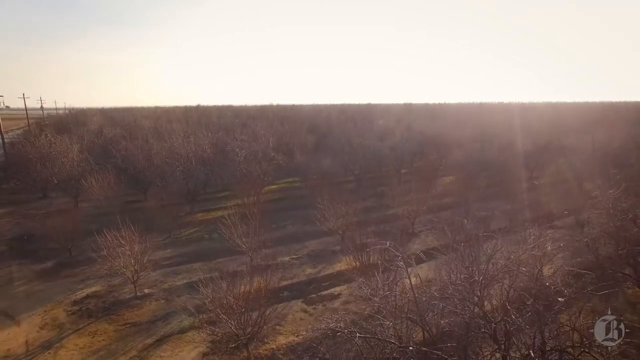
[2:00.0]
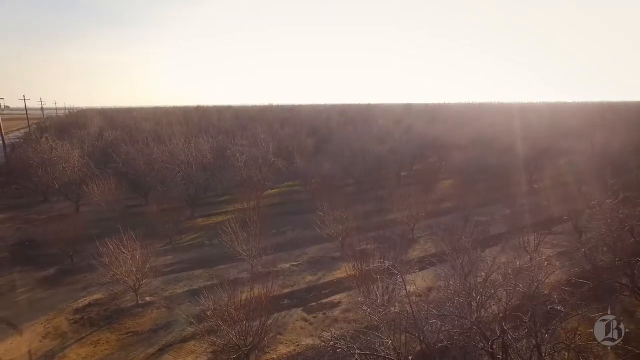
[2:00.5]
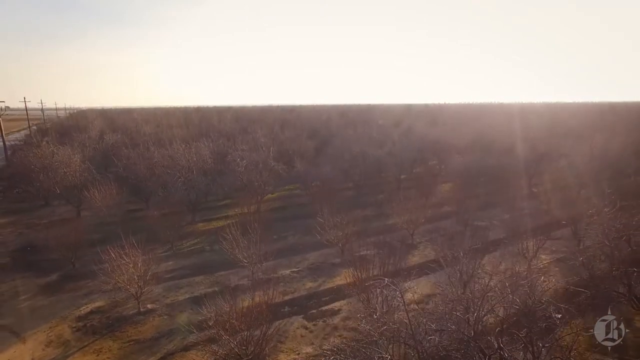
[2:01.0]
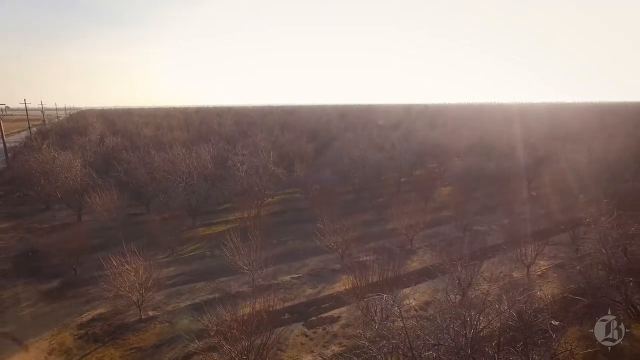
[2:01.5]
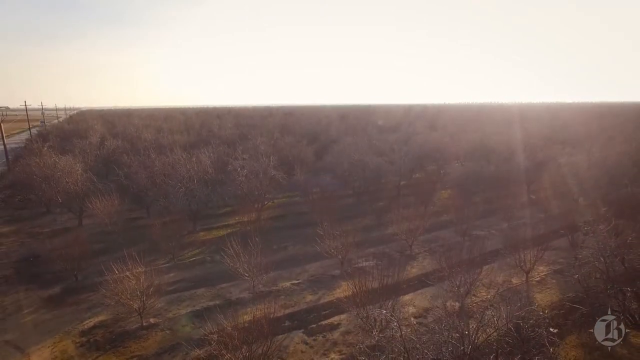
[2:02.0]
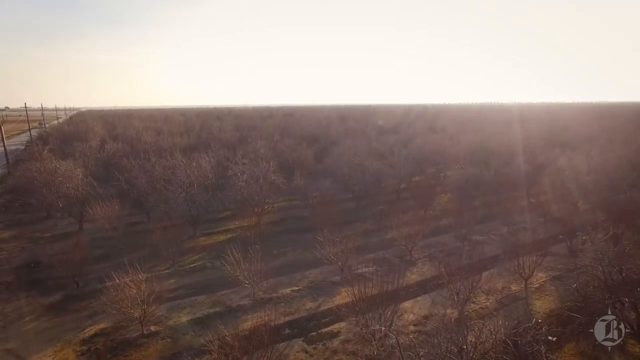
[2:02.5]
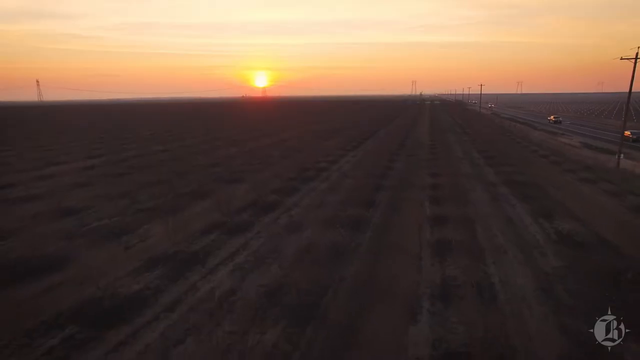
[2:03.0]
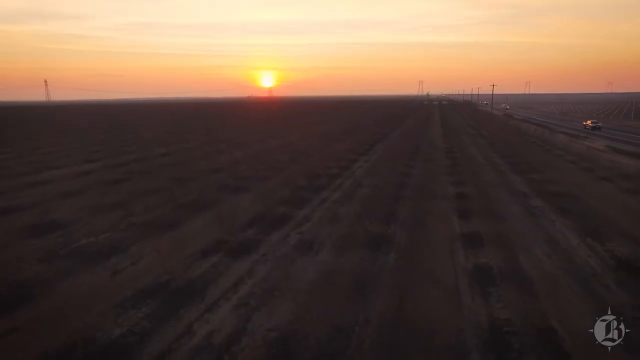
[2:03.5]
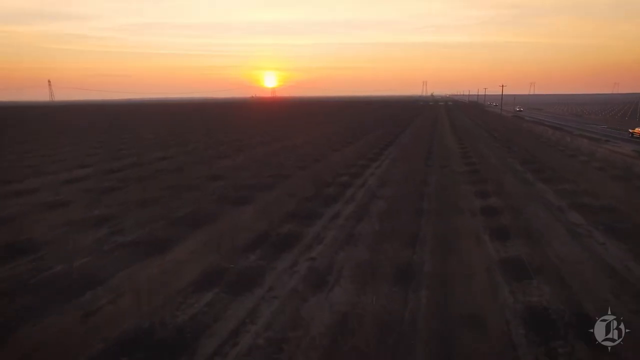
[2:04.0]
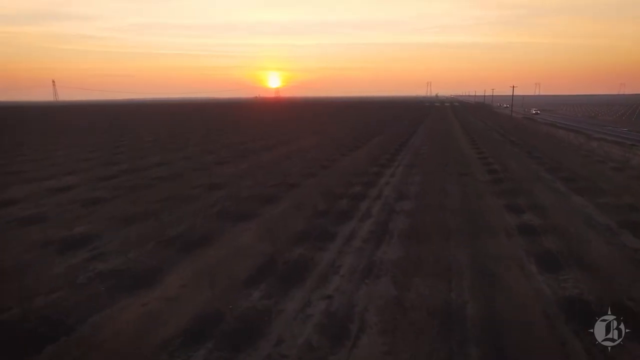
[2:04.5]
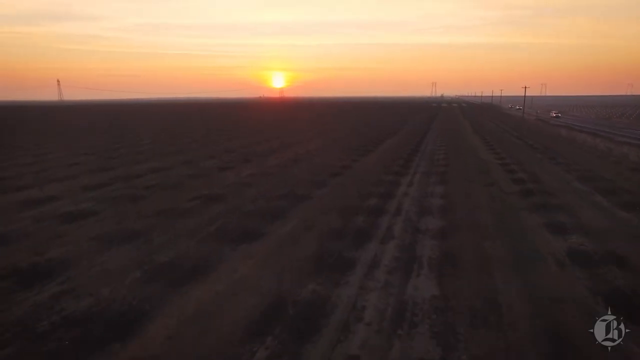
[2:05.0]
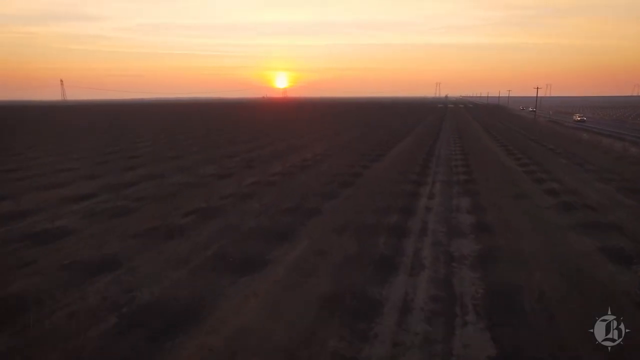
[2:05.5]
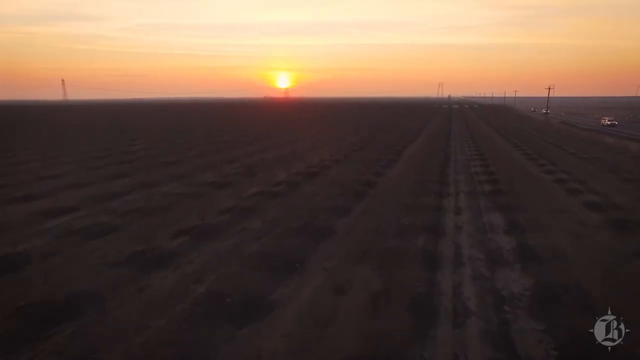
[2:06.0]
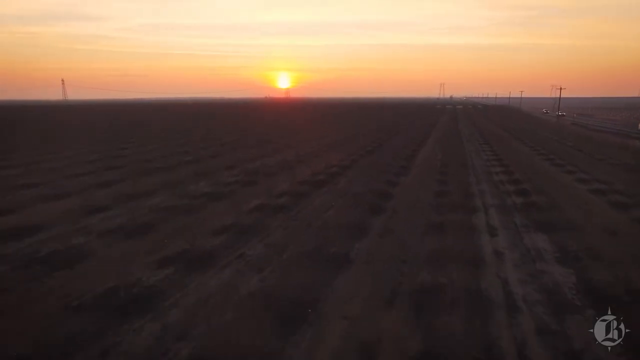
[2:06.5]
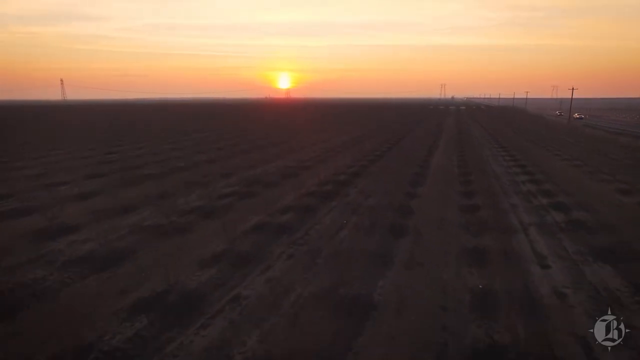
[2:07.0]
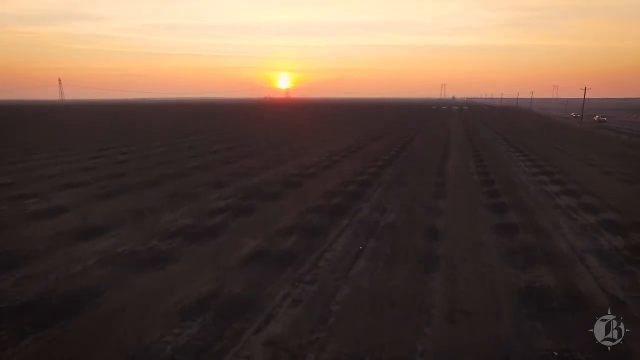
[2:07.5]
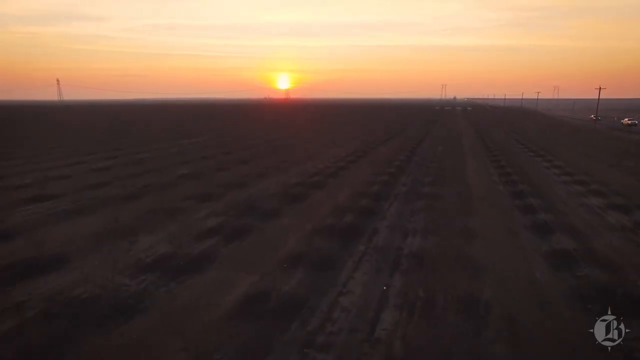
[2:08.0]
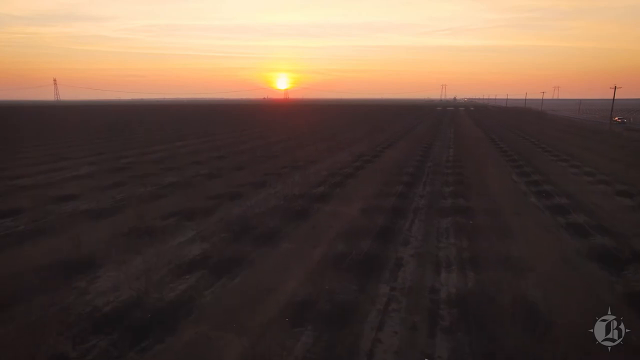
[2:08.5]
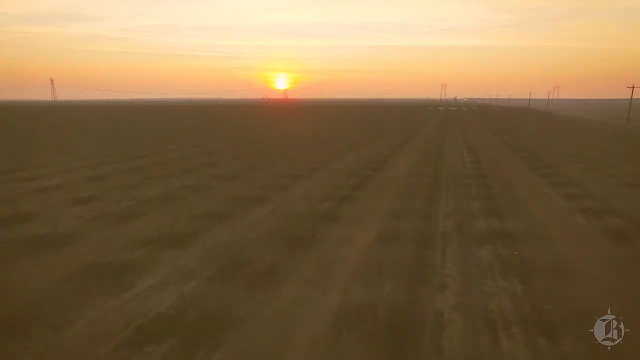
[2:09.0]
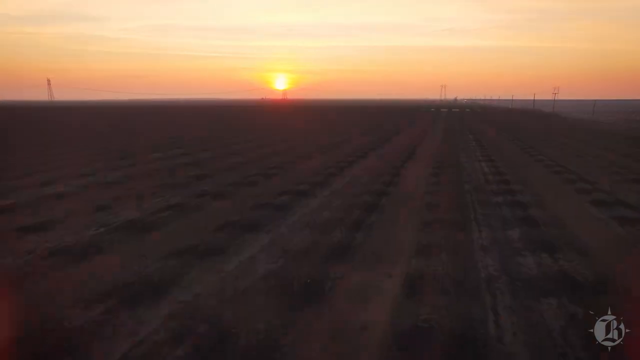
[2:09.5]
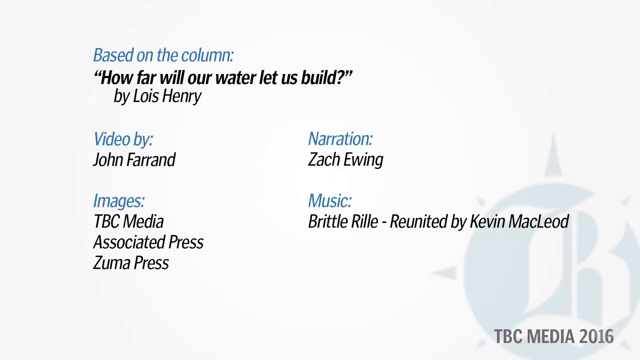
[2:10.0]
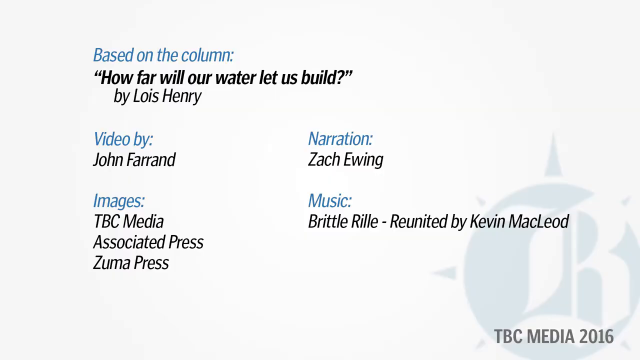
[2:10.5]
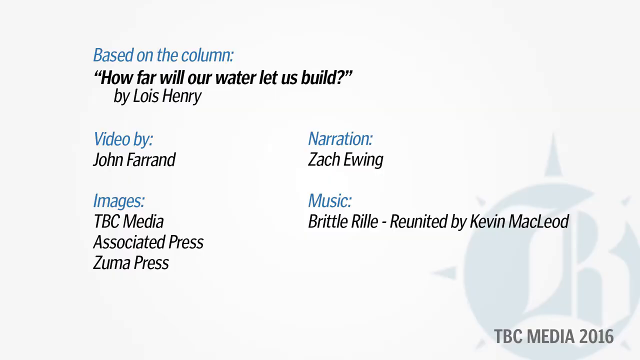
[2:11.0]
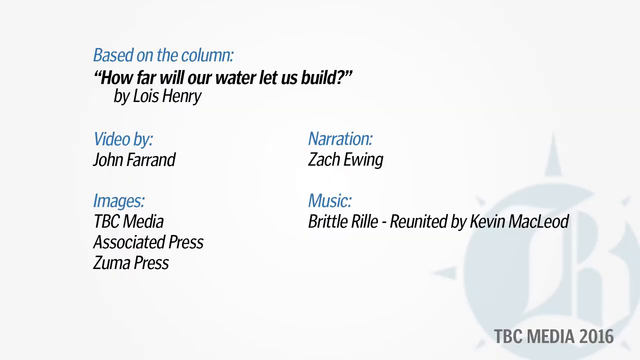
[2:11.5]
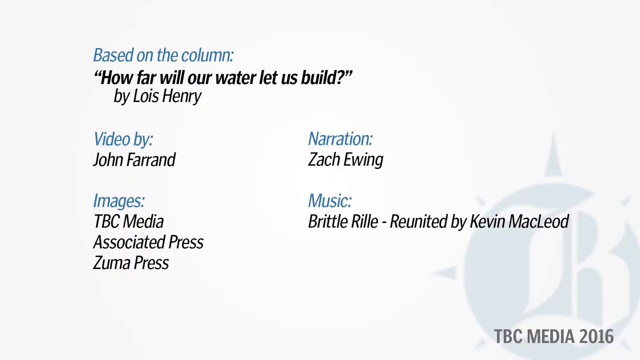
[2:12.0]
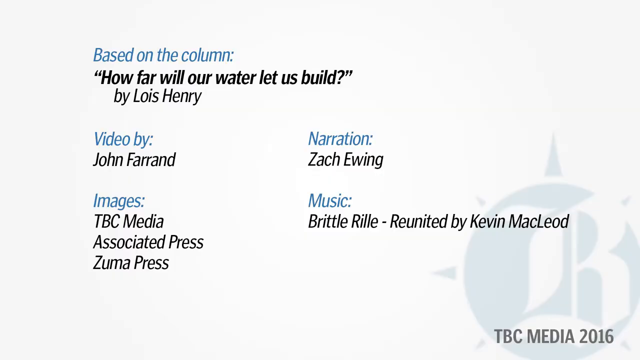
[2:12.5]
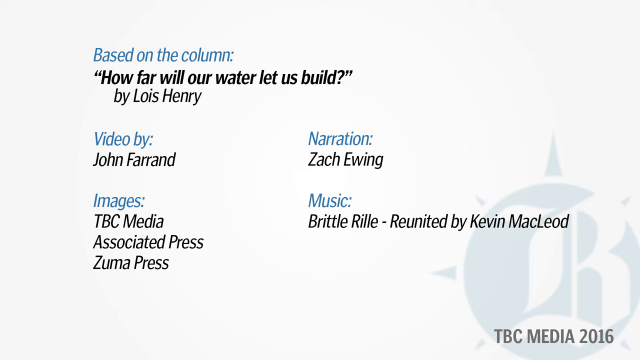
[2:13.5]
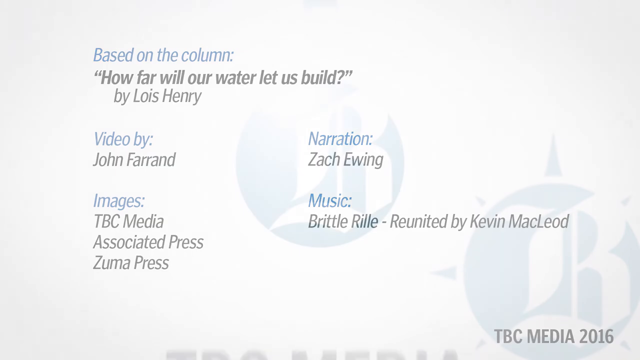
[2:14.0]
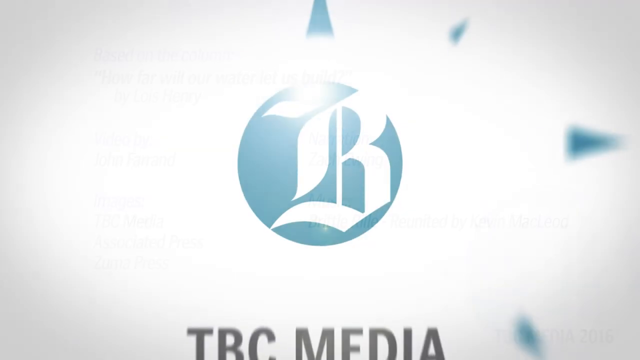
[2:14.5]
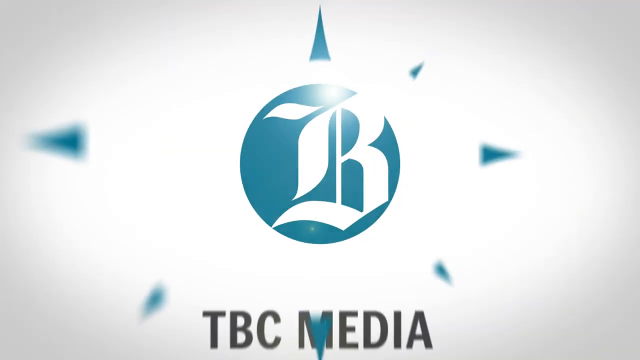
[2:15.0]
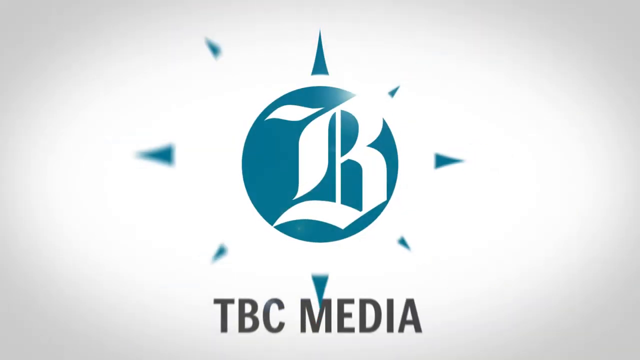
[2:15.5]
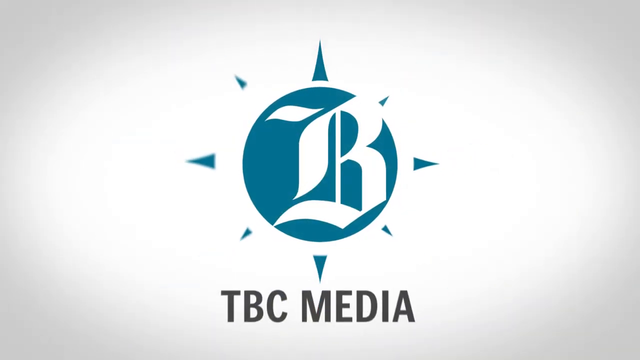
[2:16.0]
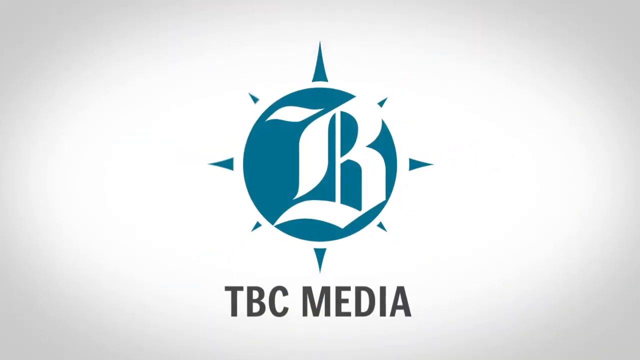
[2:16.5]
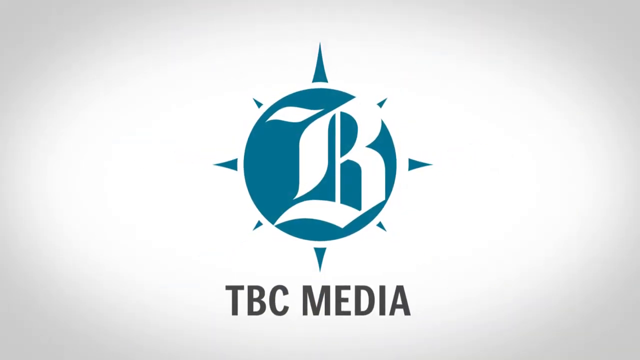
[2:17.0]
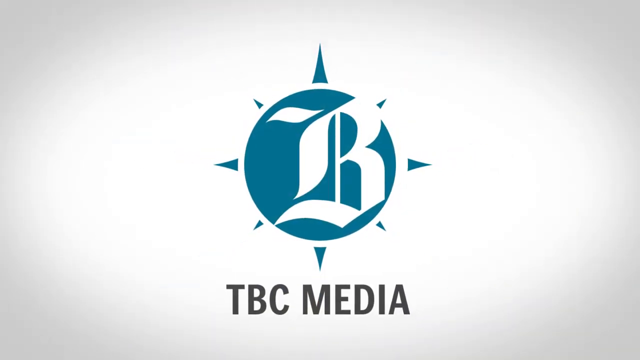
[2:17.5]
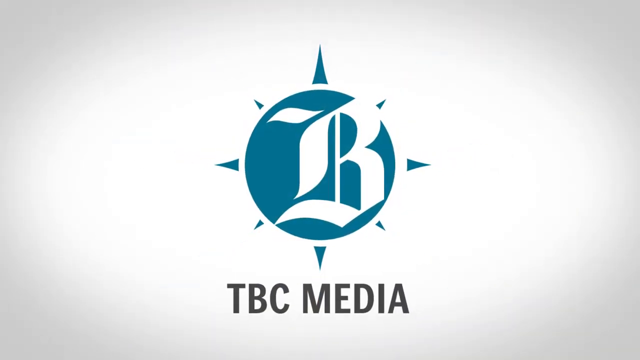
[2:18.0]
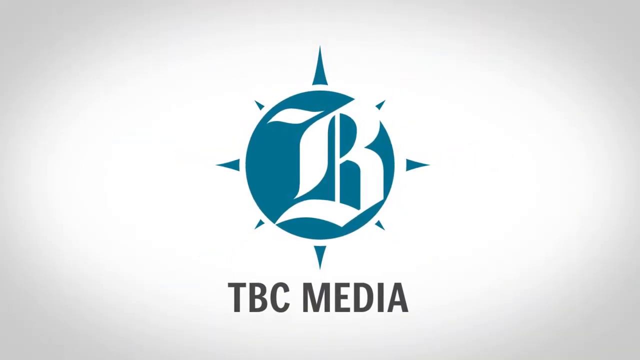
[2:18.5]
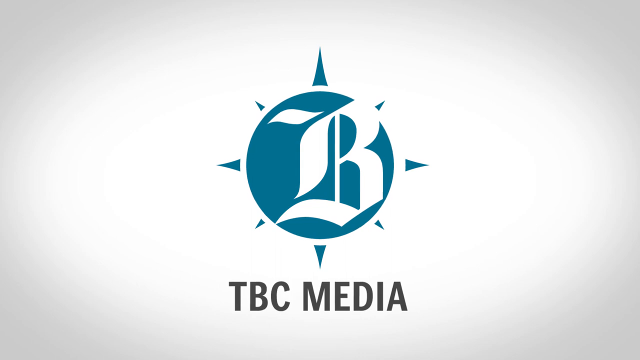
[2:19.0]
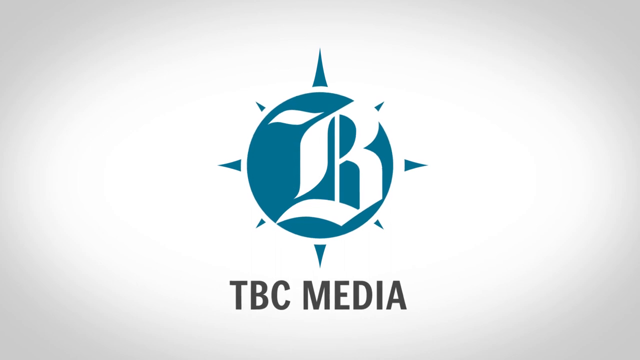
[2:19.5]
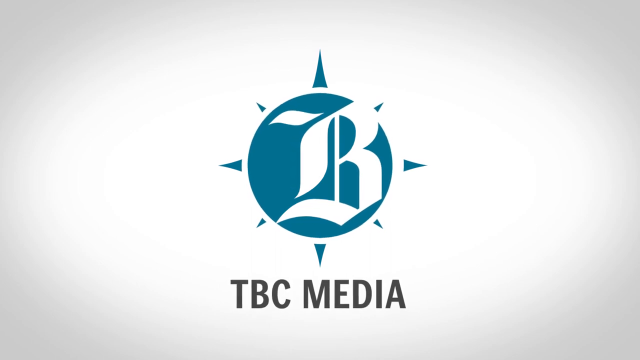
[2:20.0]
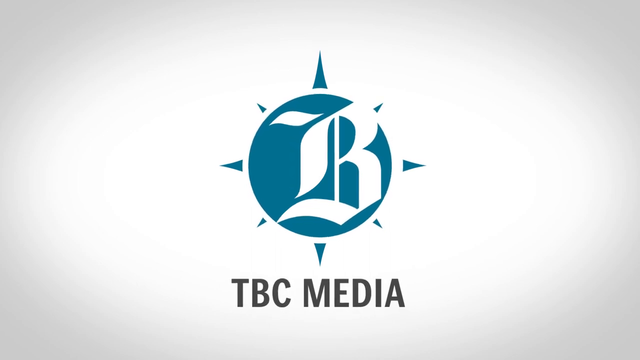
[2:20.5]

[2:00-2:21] Acres and acres of undeveloped land with barren trees stretch out as the sun shines down, reflecting on the right side of the screen, with a road and a line of telephone poles in the upper left corner. The video cuts to an area that looks like it has been cleared of trees but is not completely flat. A road on the left side has cars driving with their headlights on, telephone poles are visible, and the sun is setting in the back, casting an orangey, somewhat pinkish glow as the camera hovers over the entire field toward the sunset. Then a white background shows credits, with categories in blue text and descriptions and names in black. They include "based on the column" "how far will water let us build" by Lois Henry, and credits for the narration, the images and the music.